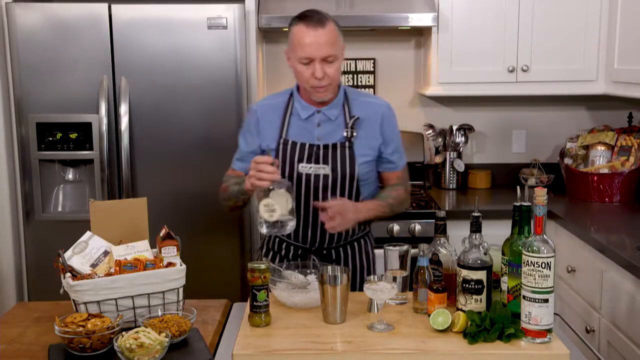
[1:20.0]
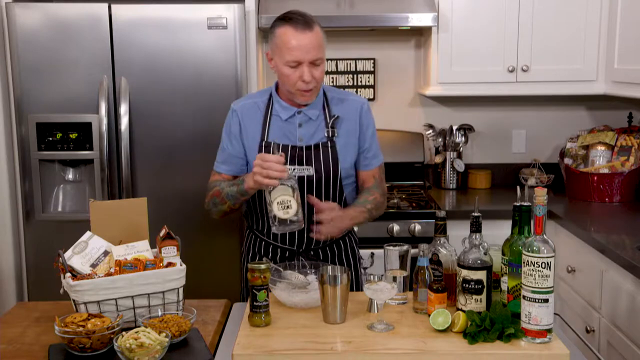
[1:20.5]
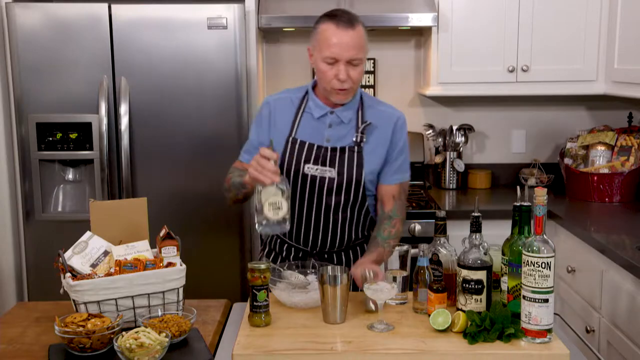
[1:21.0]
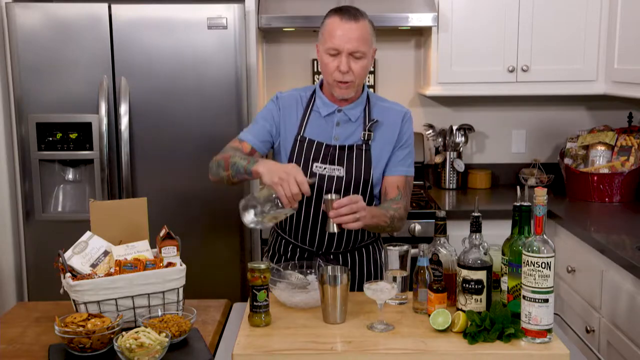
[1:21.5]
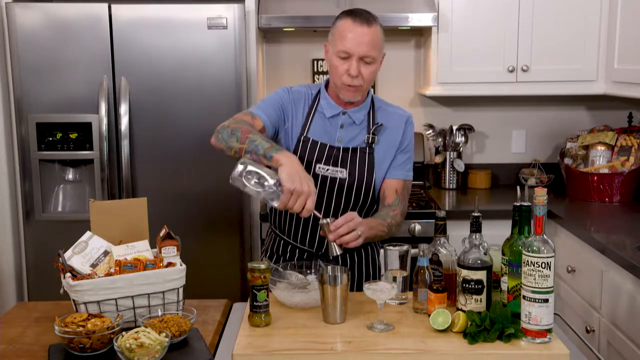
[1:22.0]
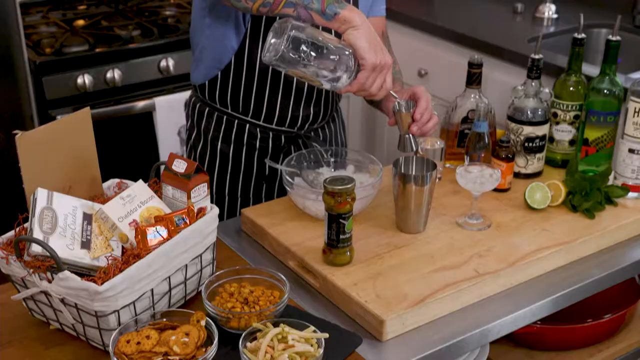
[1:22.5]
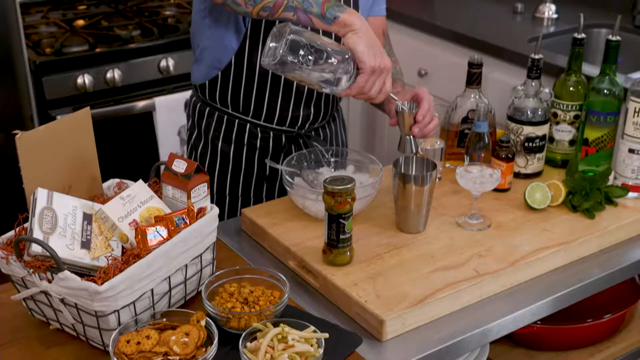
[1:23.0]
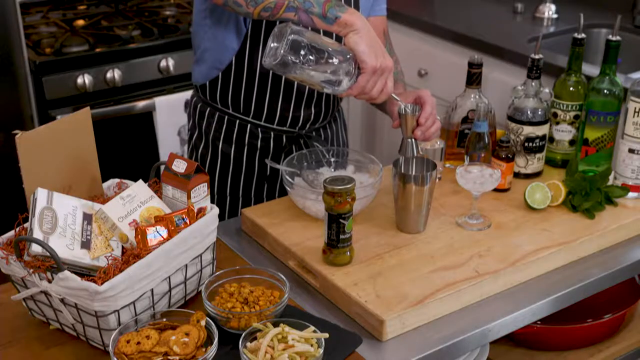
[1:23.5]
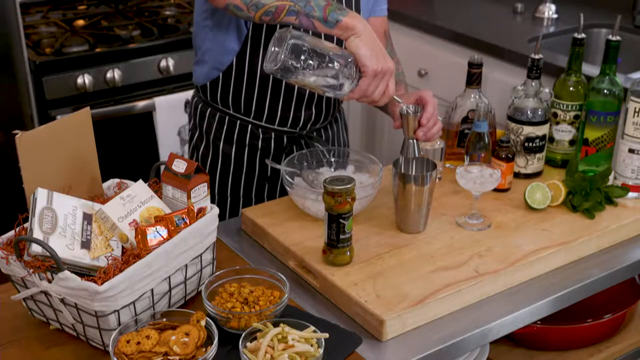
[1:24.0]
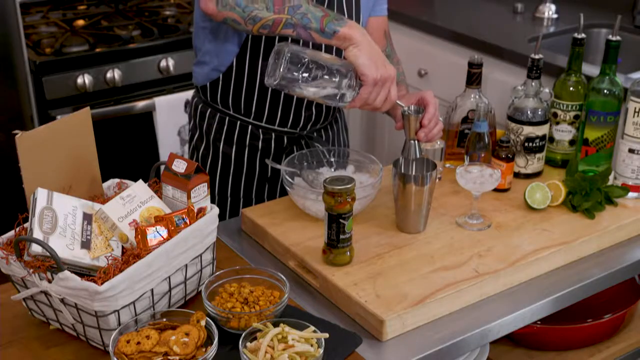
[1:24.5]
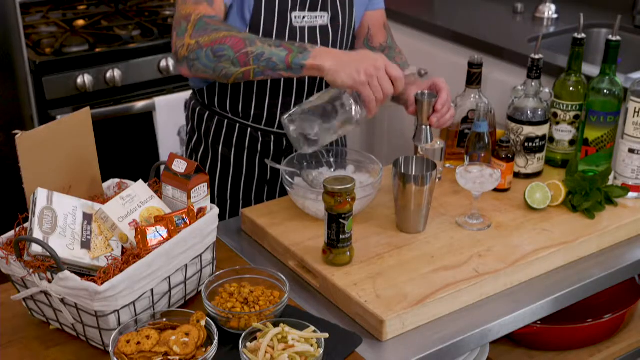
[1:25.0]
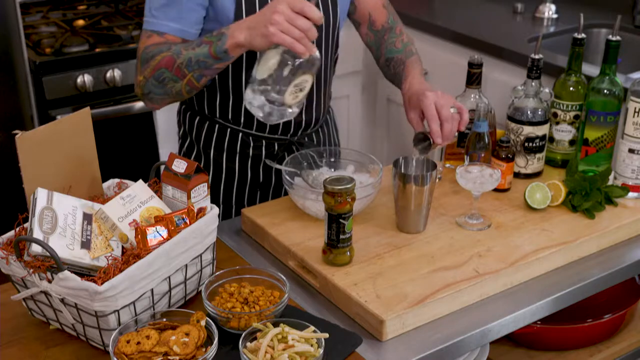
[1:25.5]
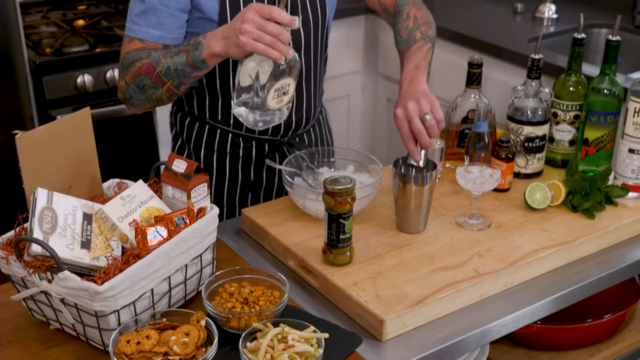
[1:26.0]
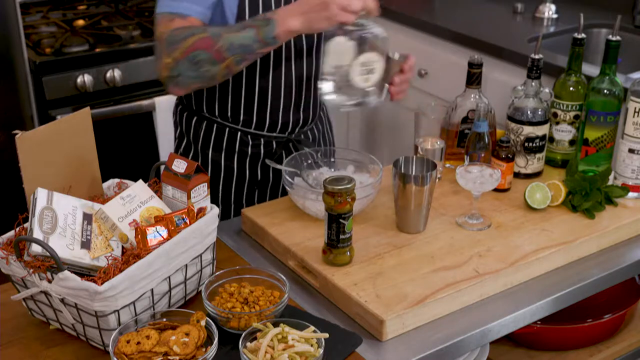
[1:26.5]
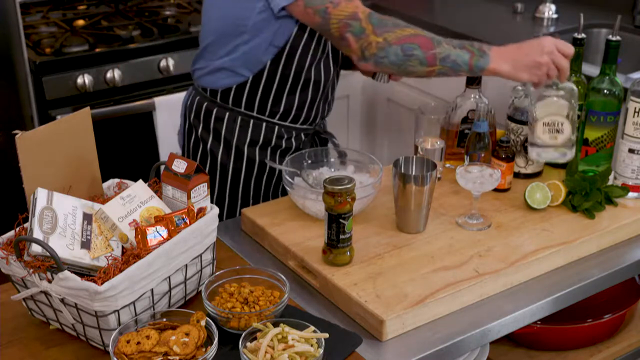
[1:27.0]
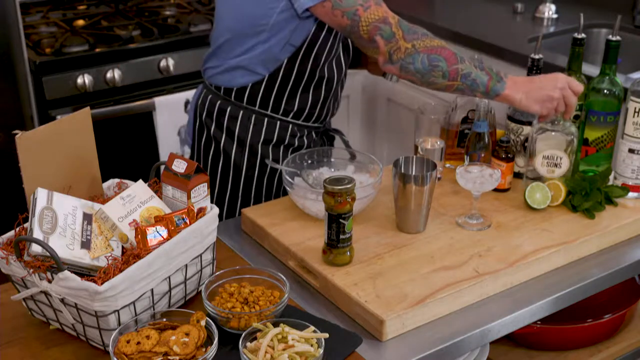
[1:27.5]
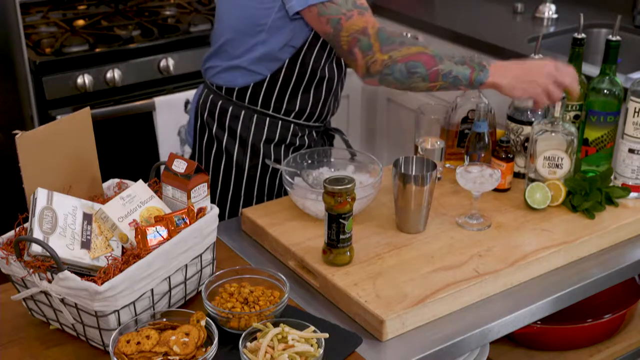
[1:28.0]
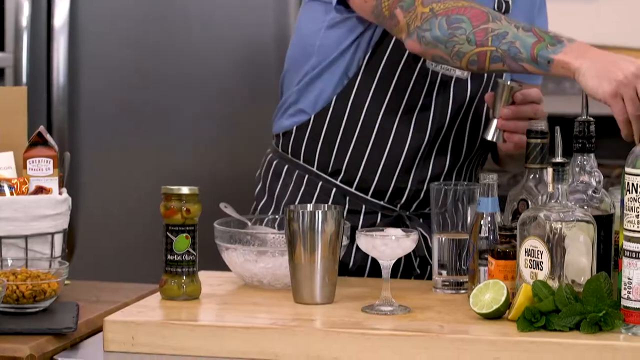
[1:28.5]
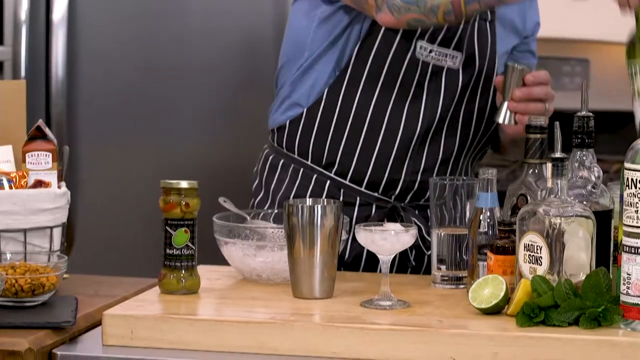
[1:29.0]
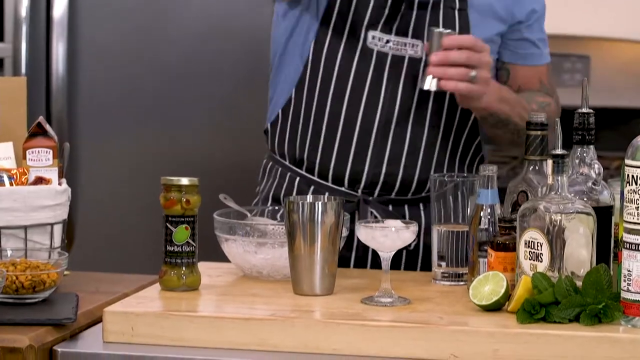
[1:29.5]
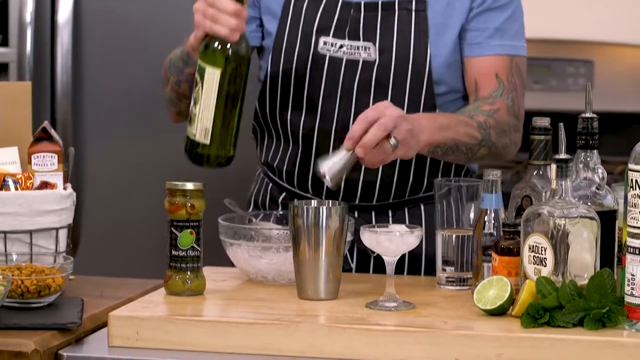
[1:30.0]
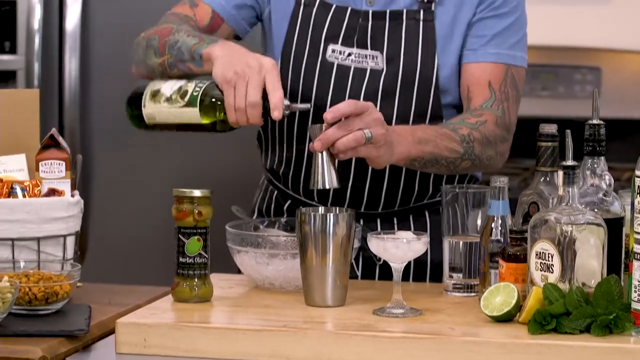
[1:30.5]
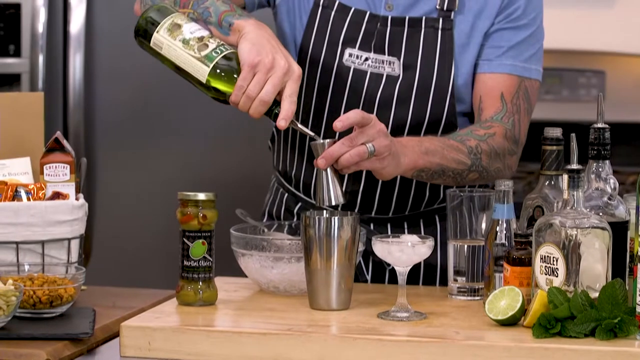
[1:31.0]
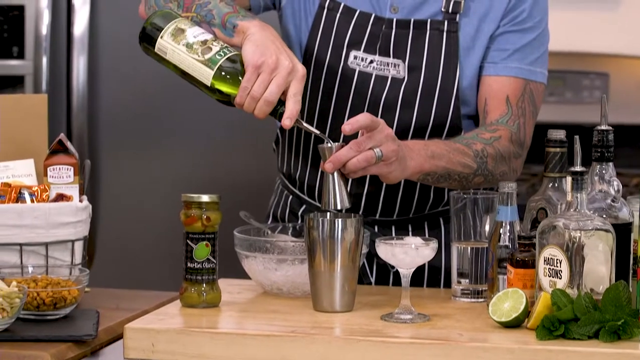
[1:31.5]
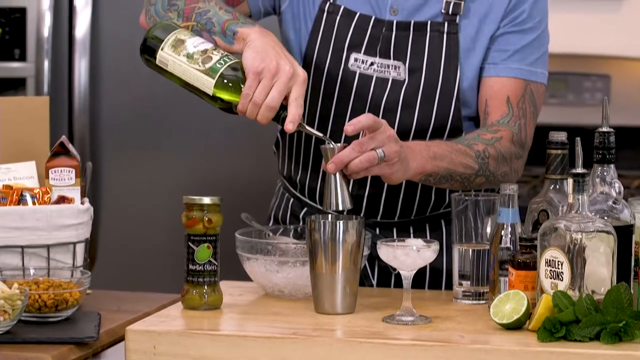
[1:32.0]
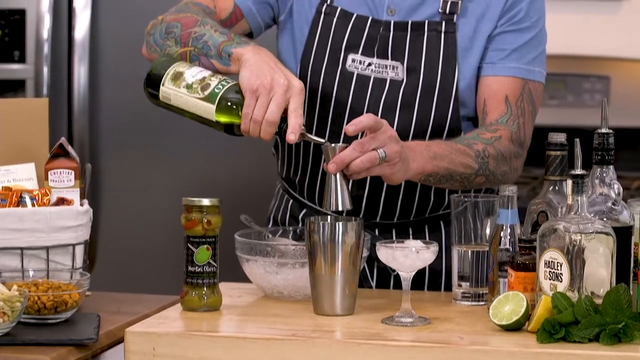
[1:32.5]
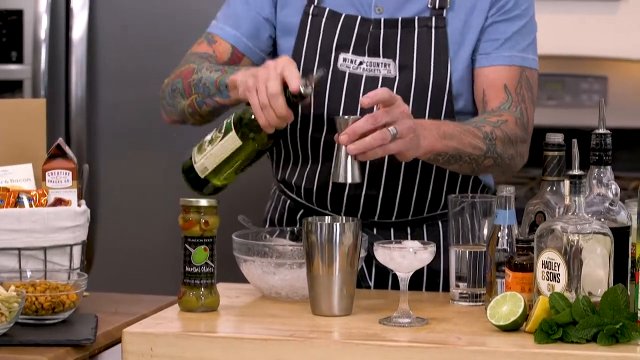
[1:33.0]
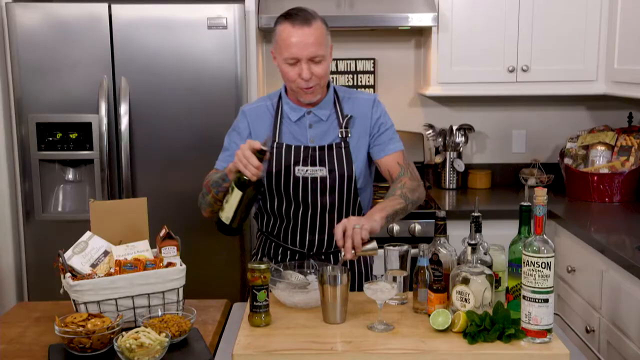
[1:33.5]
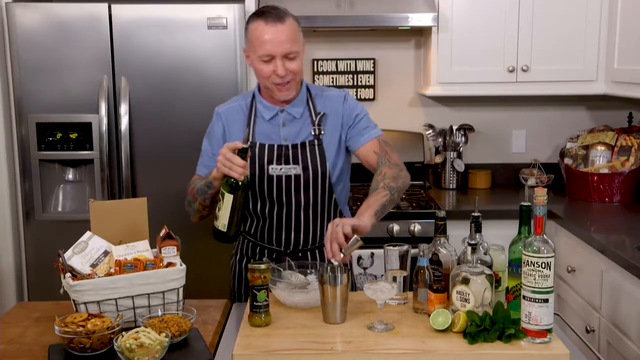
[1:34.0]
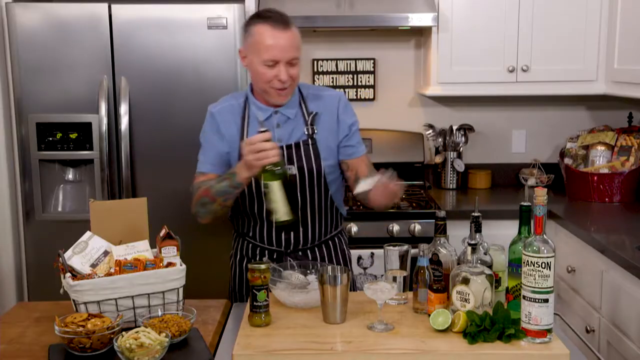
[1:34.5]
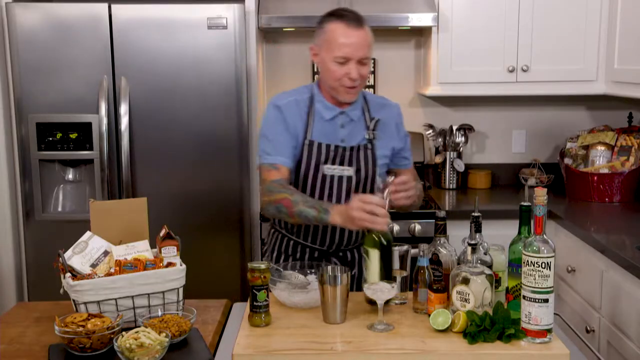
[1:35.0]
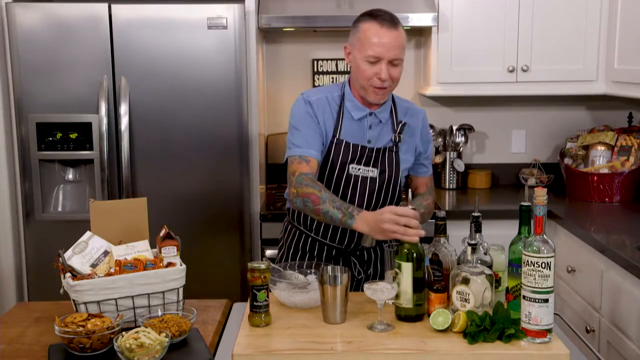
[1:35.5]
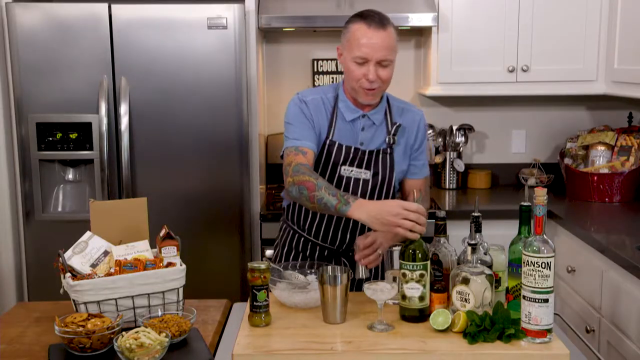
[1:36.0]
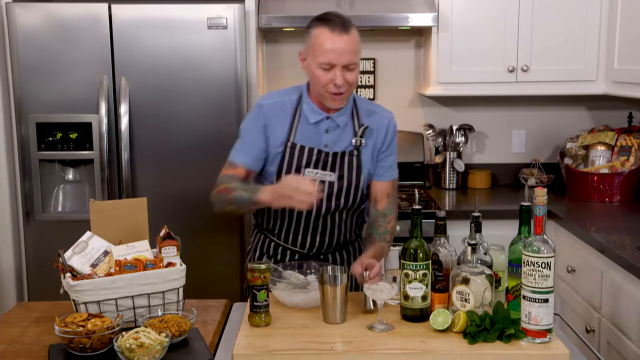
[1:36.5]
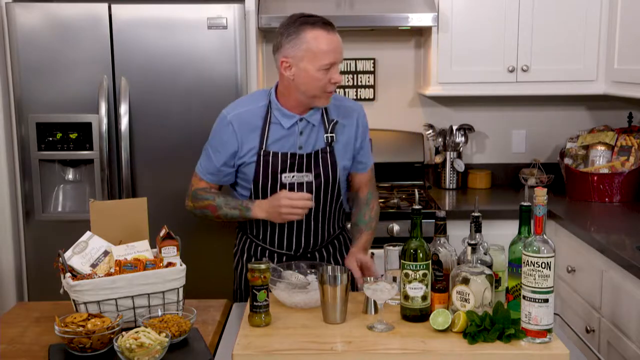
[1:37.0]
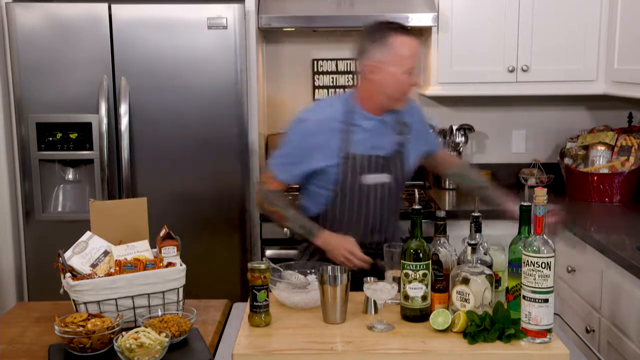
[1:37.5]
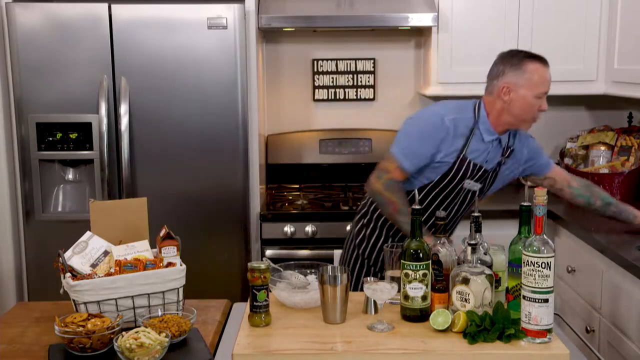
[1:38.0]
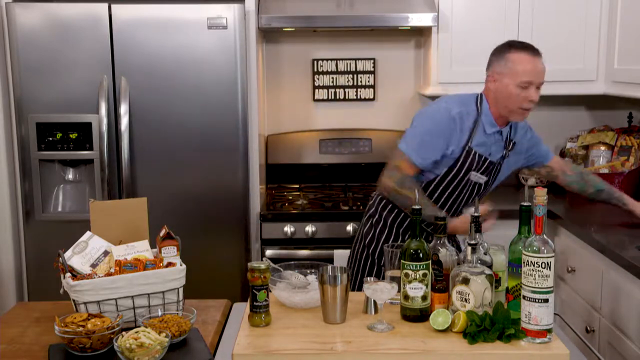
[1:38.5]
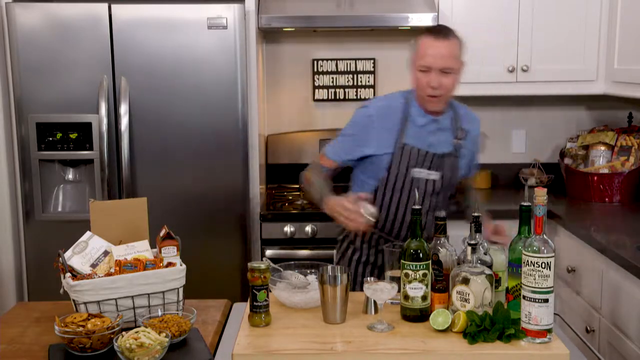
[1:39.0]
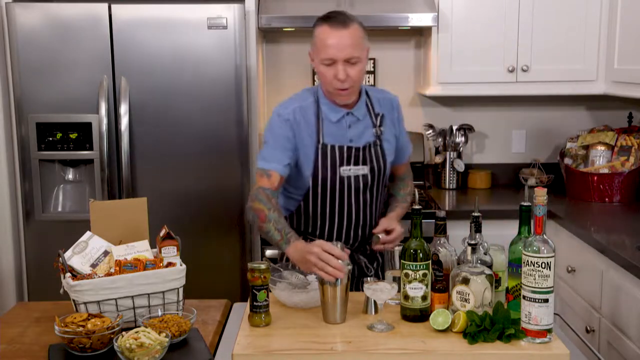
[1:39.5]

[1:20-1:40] The man pours what looks like gin from a colourless, transparent bottle into a small container, then adds another alcohol from a green bottle, filling the container. He grabs what looks like the lid of the silver steel tumbler and closes the tumbler, then holds the silver bottle as if about to shake it. In the background something is hanging in front of the stove. Some items are still inside the basket that came with the cocktail shaker.